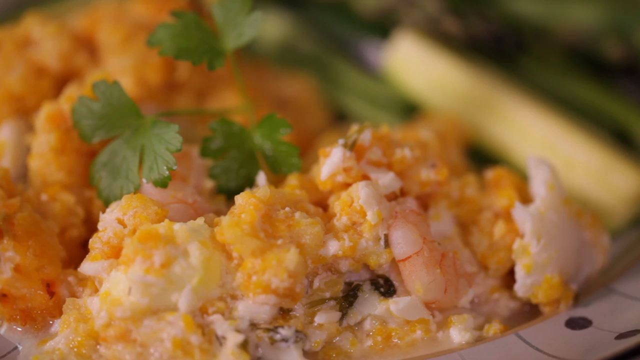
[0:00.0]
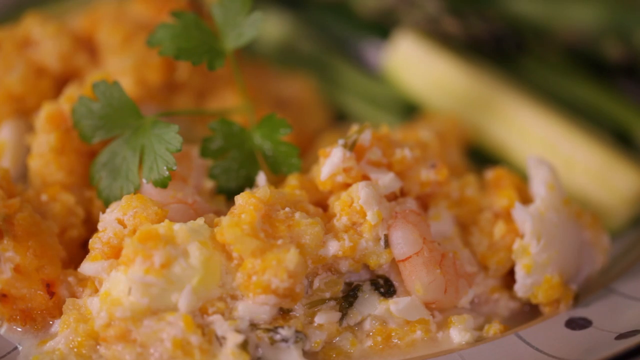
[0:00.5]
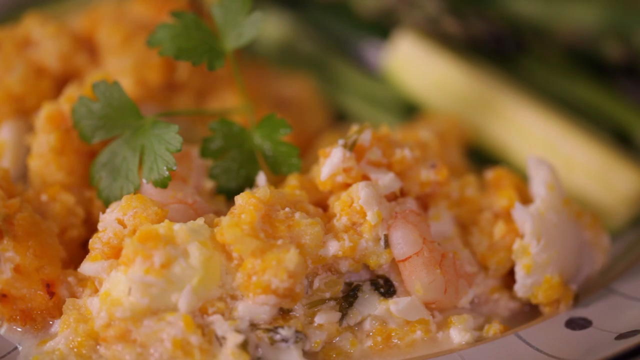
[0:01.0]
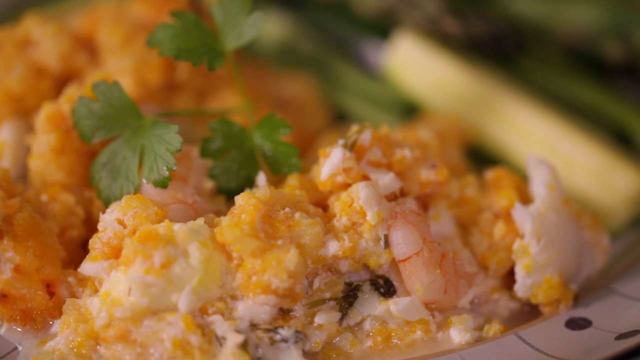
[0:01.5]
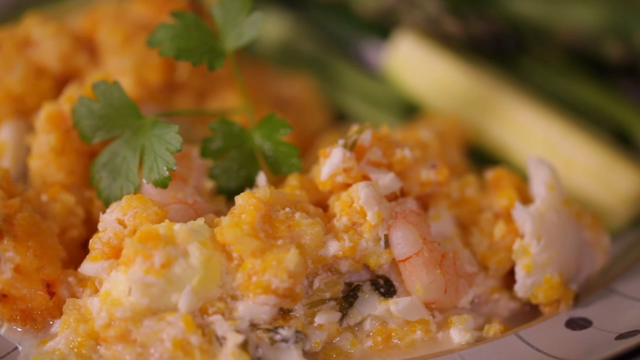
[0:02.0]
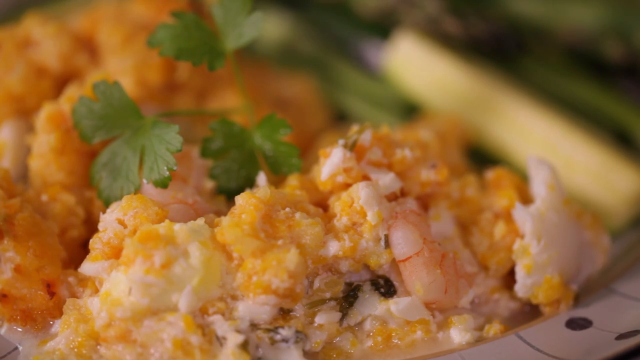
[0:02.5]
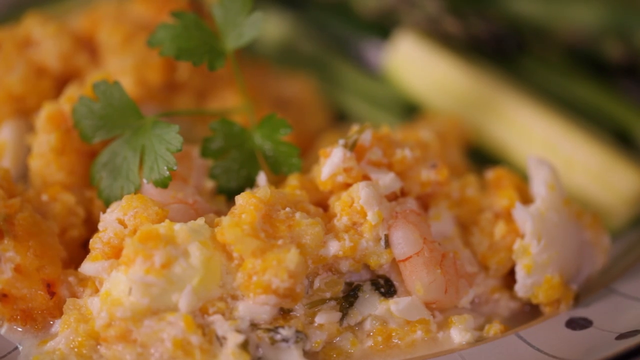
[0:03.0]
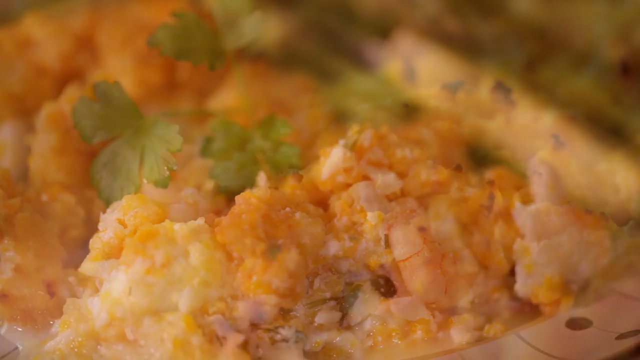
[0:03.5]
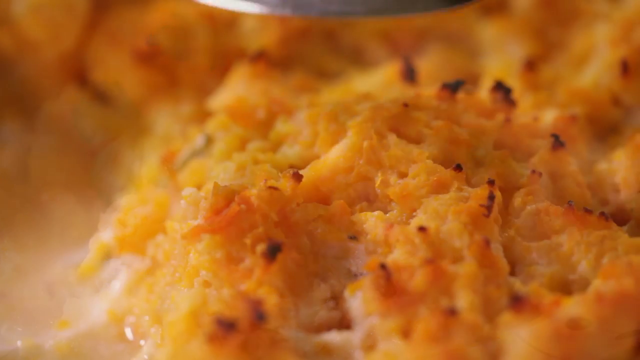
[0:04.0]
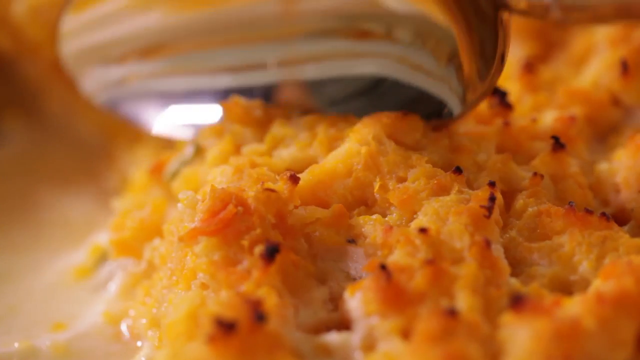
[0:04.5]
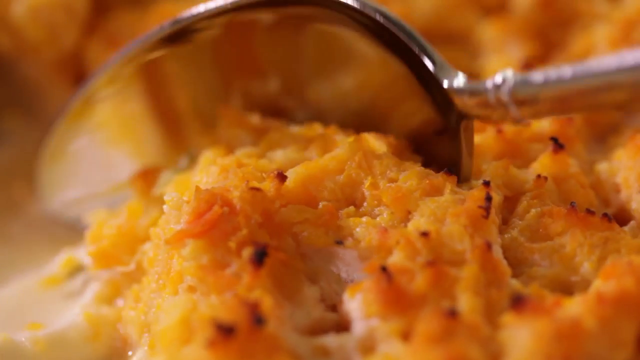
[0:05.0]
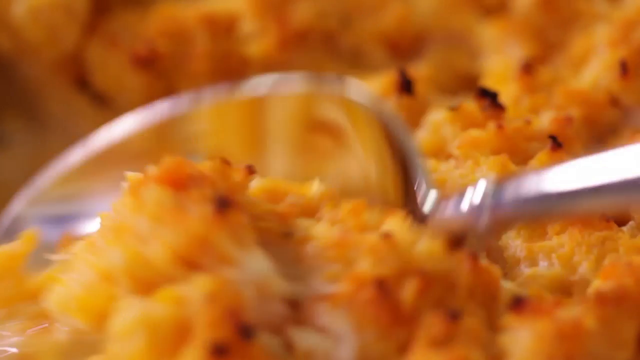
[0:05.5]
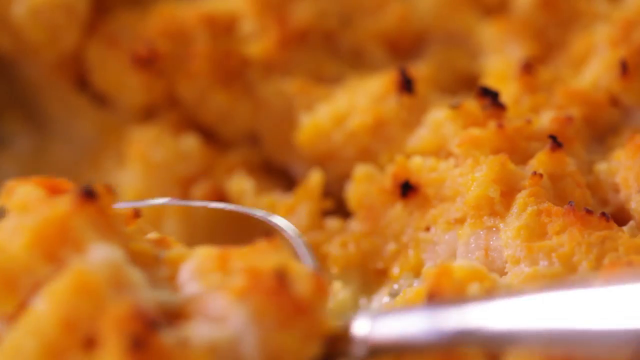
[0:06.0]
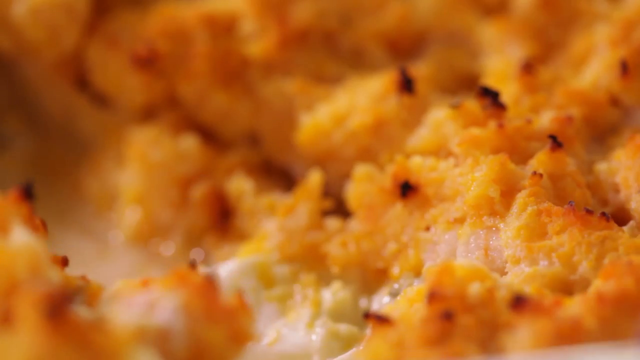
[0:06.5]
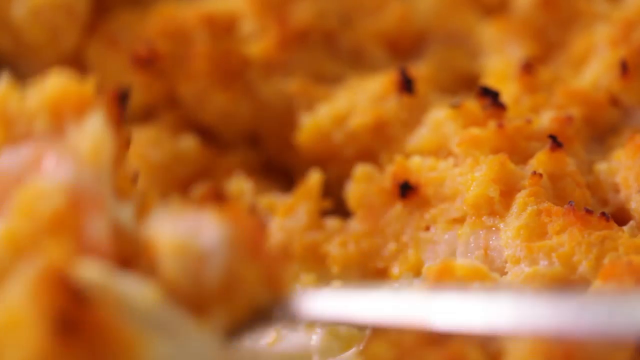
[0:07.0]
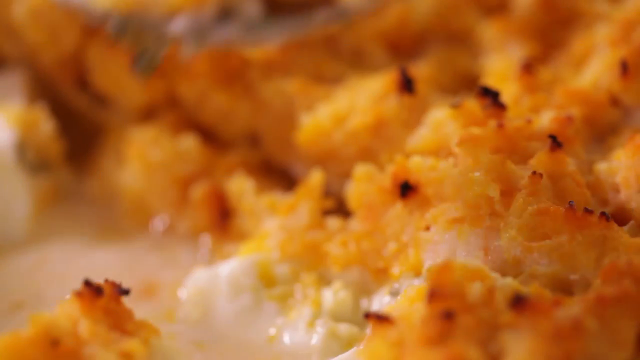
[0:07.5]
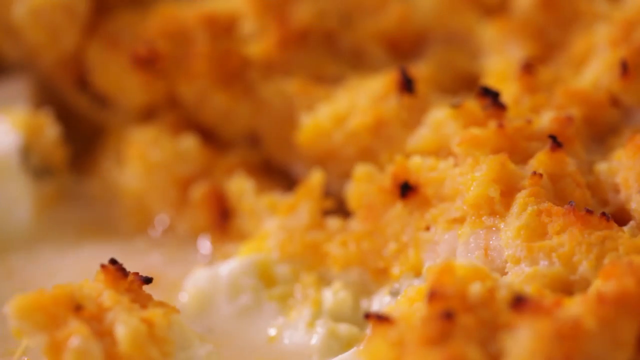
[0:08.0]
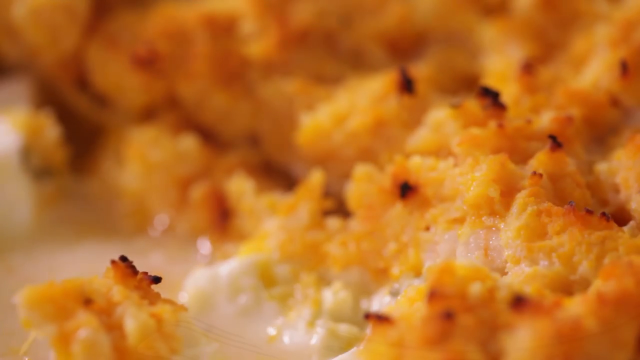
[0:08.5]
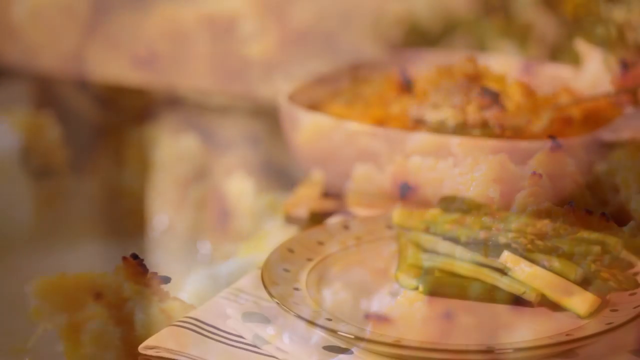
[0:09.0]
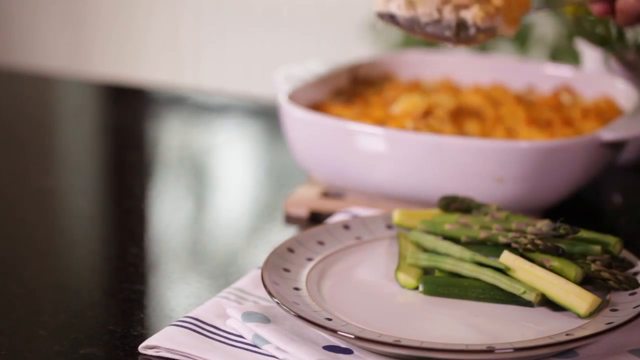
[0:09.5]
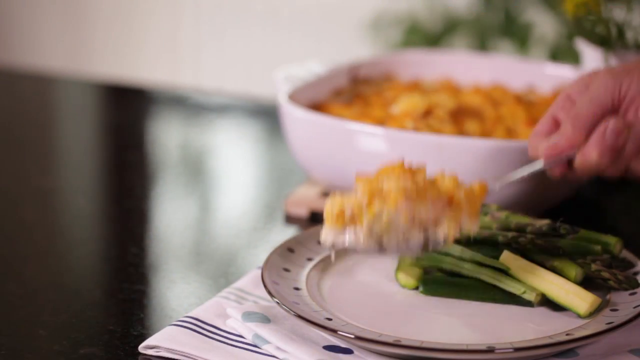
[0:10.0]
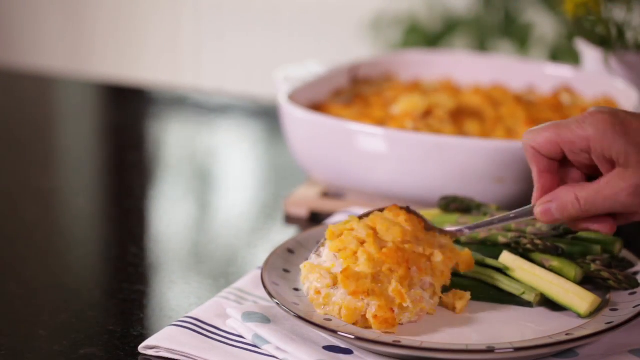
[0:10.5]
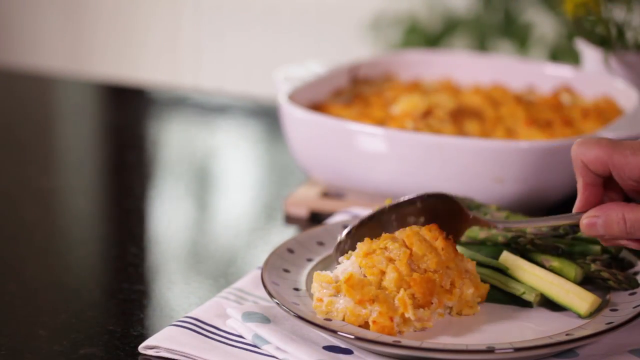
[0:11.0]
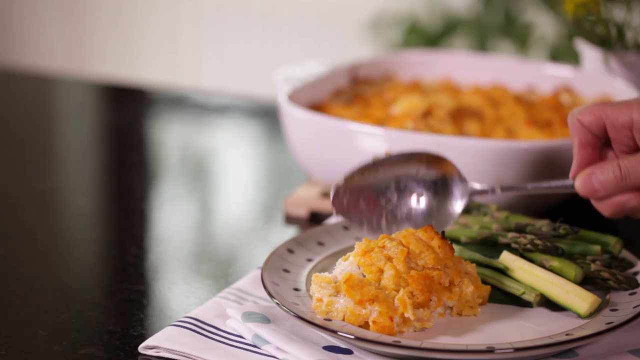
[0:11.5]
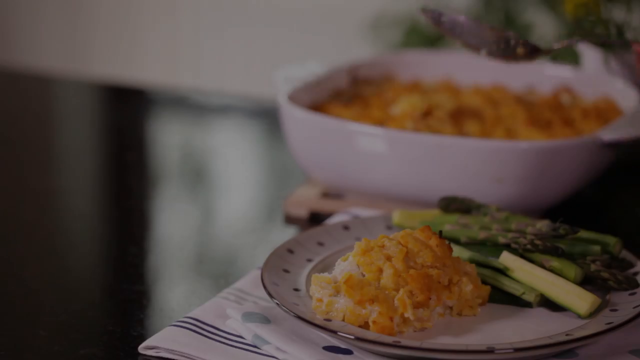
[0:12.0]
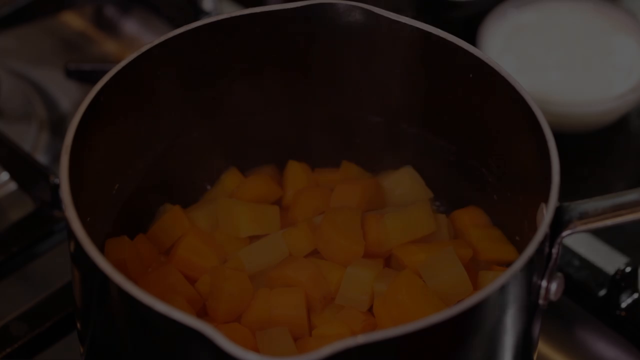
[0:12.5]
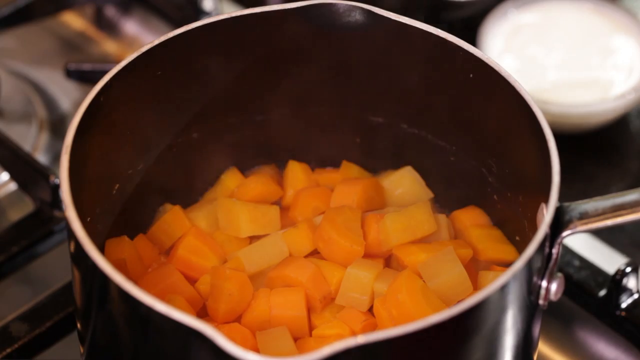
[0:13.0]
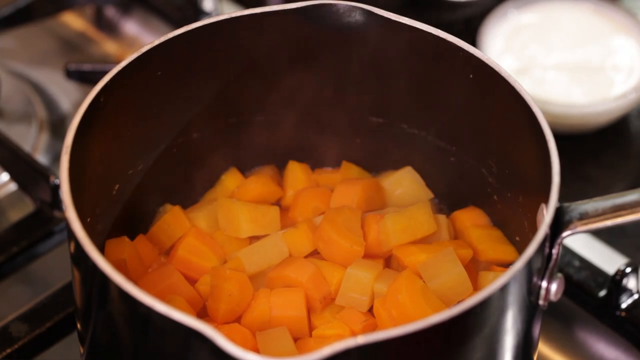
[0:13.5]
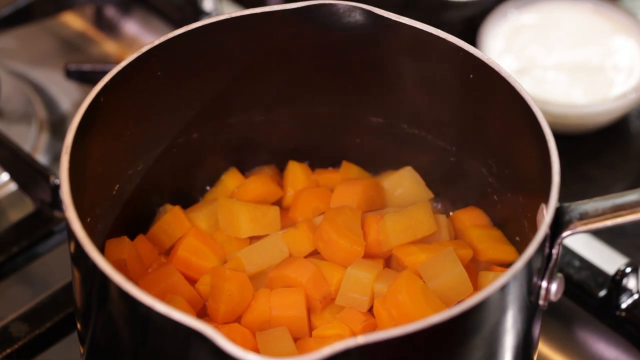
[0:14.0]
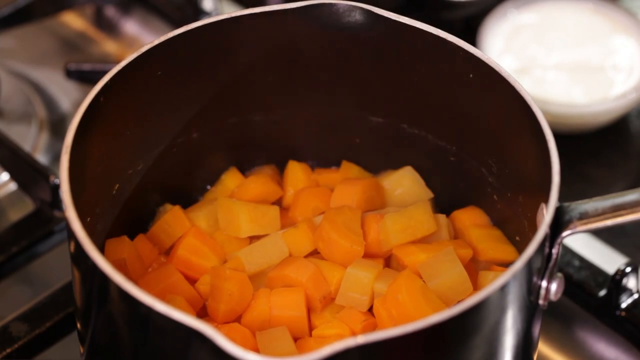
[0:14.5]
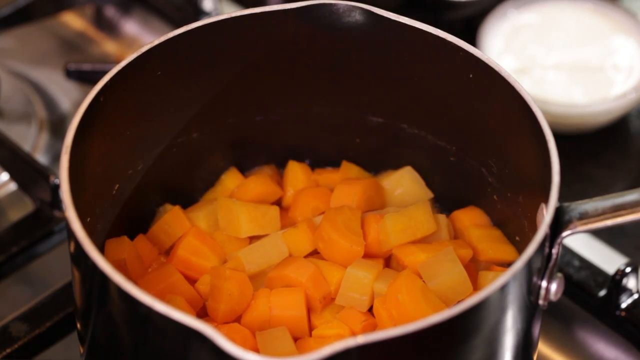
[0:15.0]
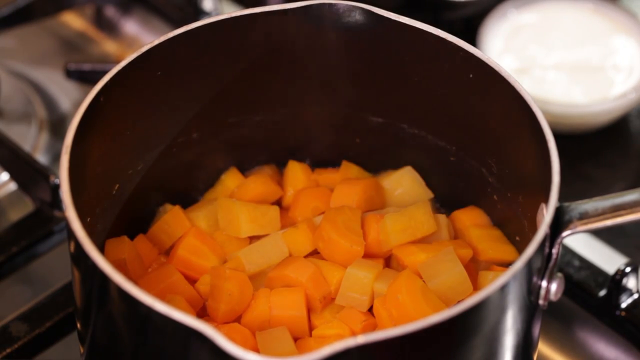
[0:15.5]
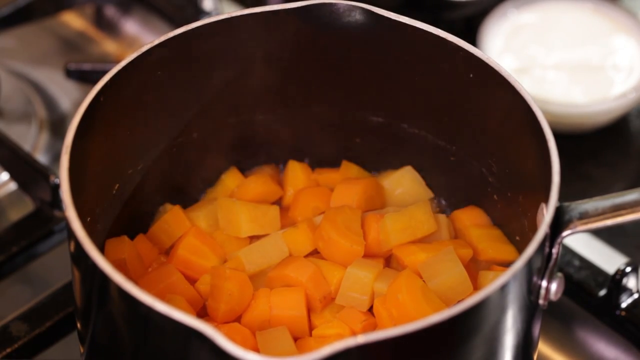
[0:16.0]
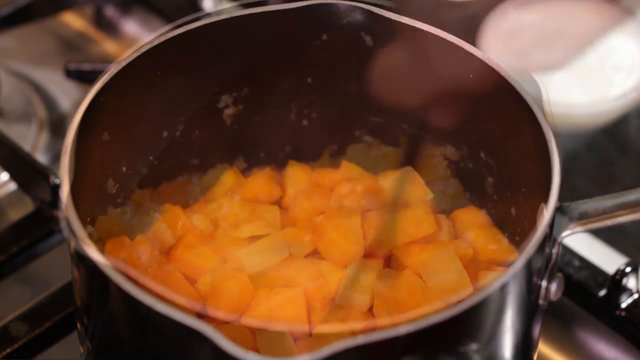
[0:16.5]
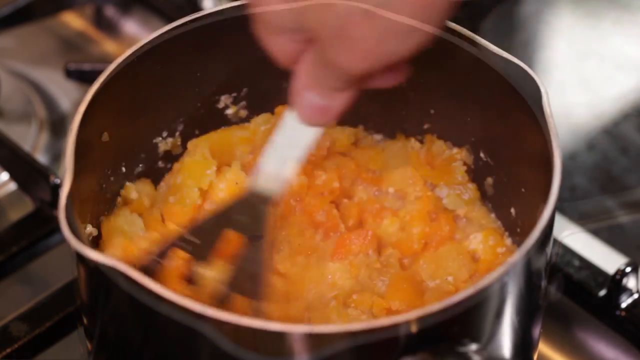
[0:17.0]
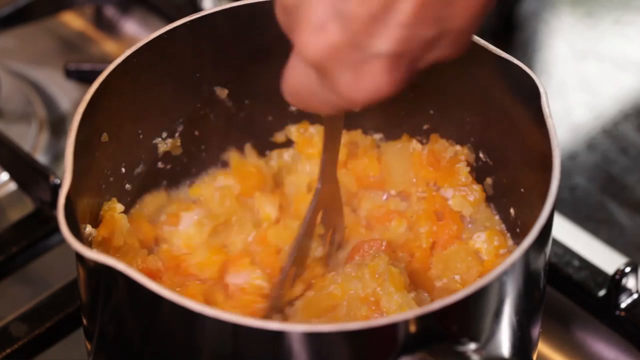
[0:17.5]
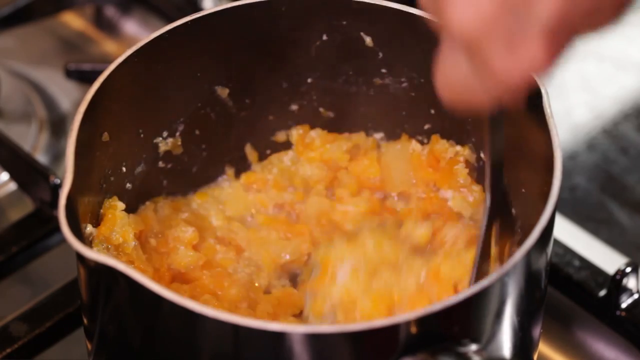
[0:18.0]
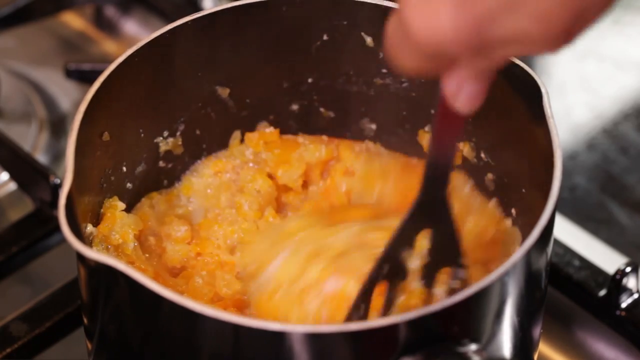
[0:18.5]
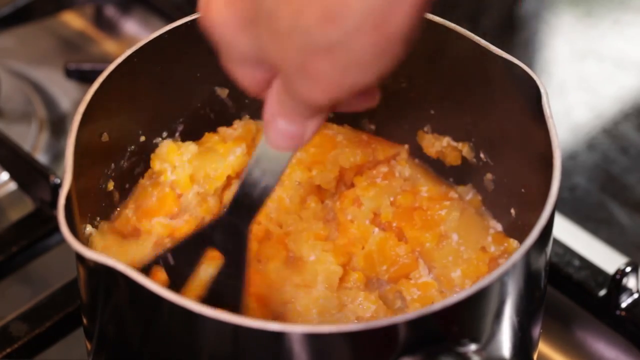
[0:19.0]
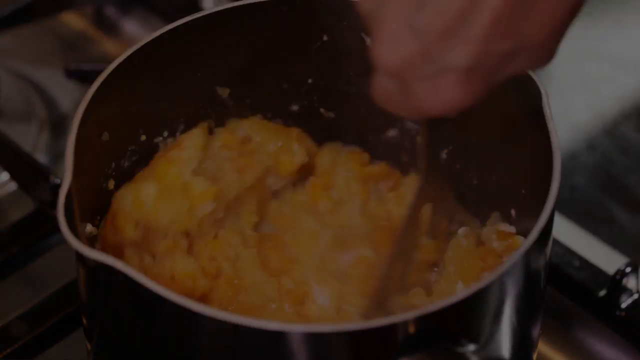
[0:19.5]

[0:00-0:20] The focus is on a food dish being prepared and then plated. In a kitchen area, a black pot holds a dish that is being sort of mashed and ground together. Very zoomed-in images of the food on a plate show its texture and quality: it is very creamy, with orange, white and yellow coloring and a flakiness to it. It appears to be a fish casserole type of dish, with some sweet potato sort of mashed up, some flaky fish, some green vegetables and some parsley. On a plate there are green vegetables that include what appears to be okra. The video sort of cuts between images of the food being prepared and a casserole dish being scooped out of, with the food displayed on the plate next to the vegetables. All of the imagery is set in a kitchen or dining style area.